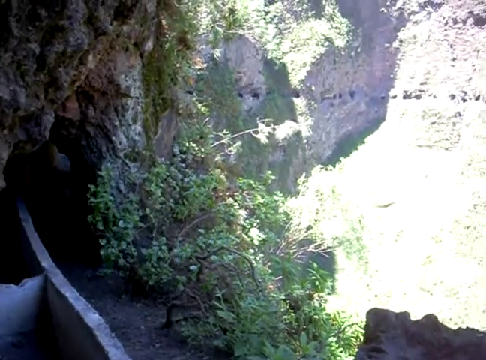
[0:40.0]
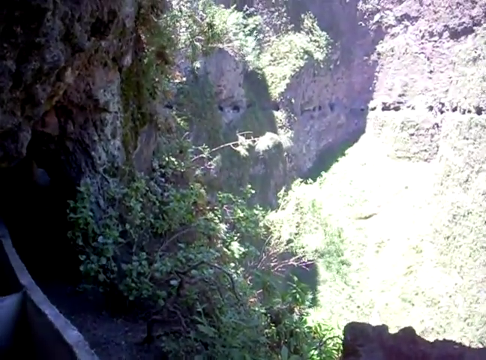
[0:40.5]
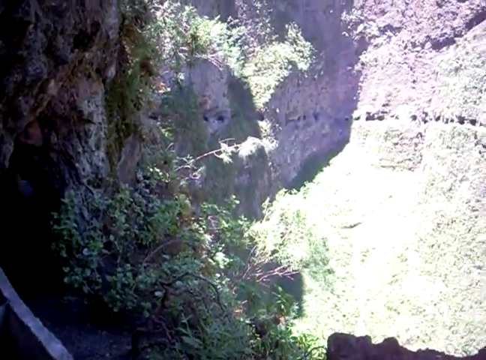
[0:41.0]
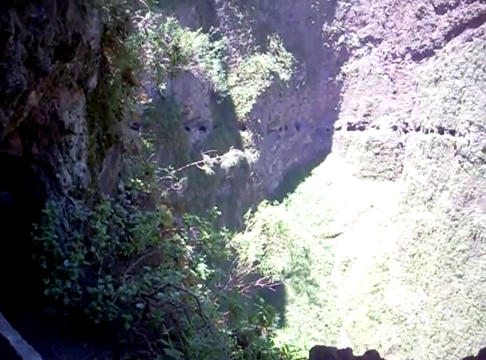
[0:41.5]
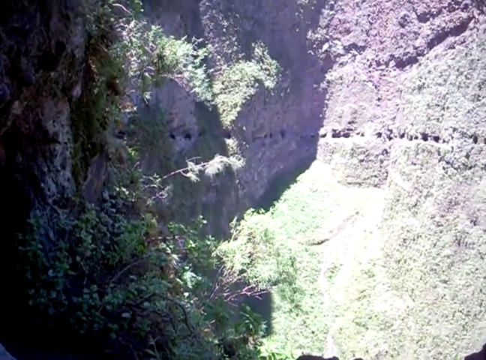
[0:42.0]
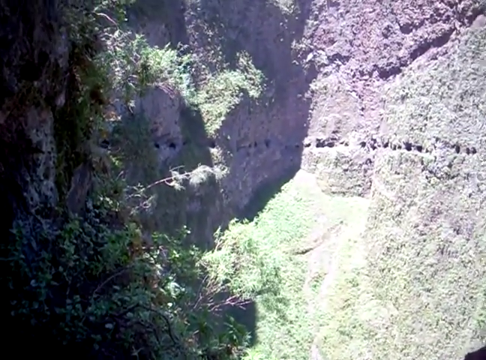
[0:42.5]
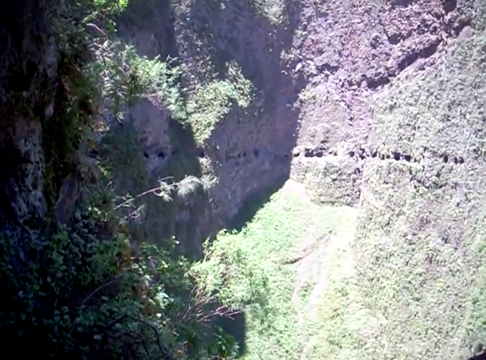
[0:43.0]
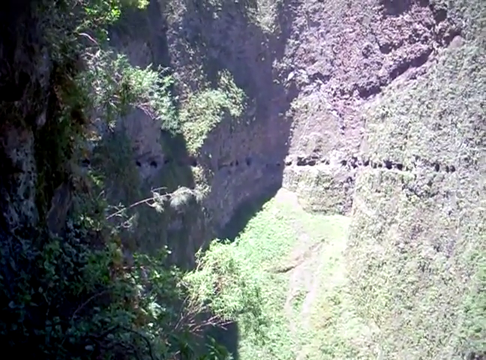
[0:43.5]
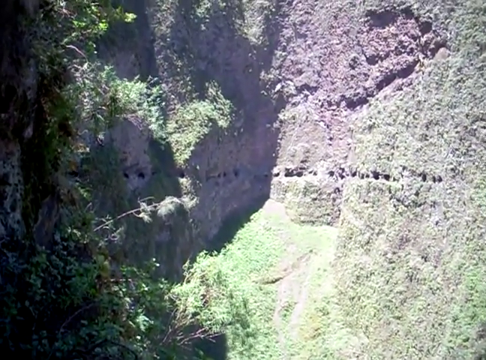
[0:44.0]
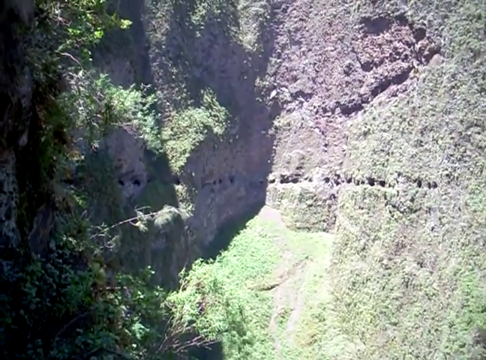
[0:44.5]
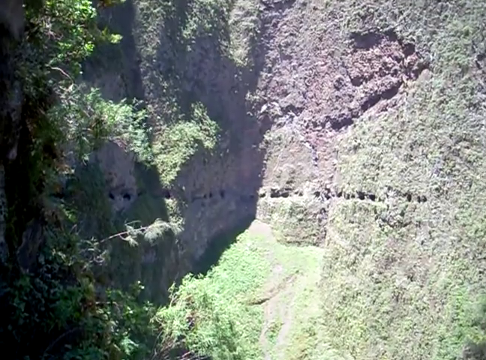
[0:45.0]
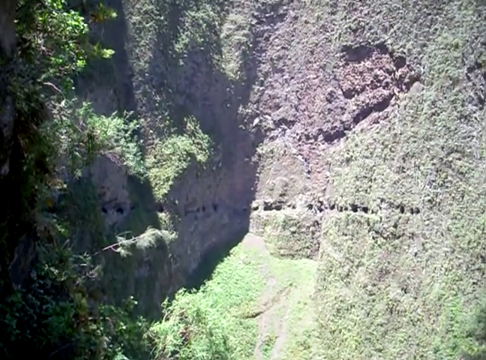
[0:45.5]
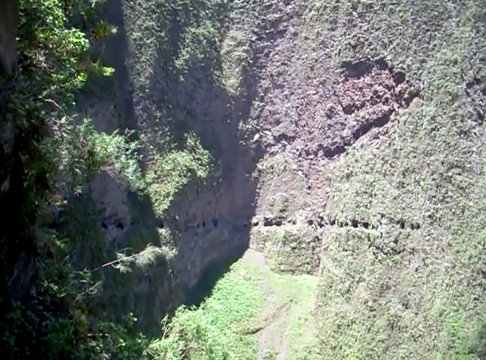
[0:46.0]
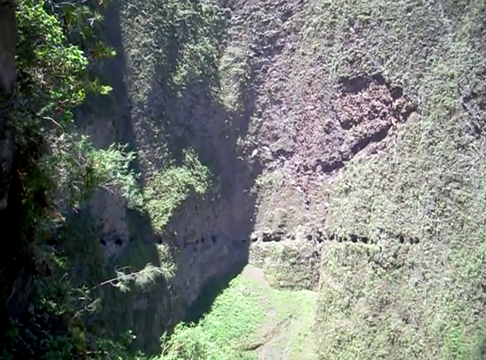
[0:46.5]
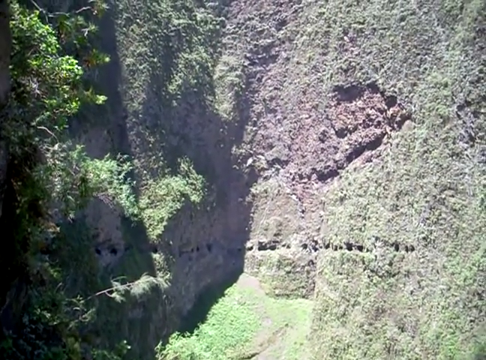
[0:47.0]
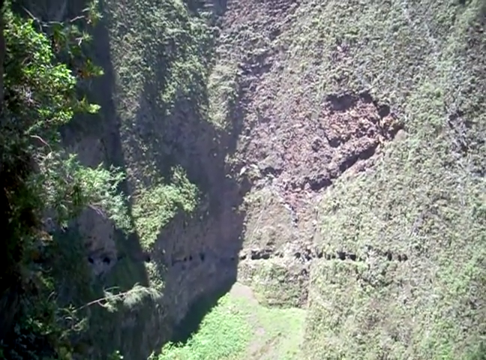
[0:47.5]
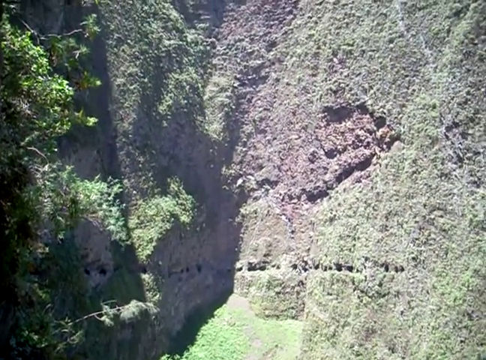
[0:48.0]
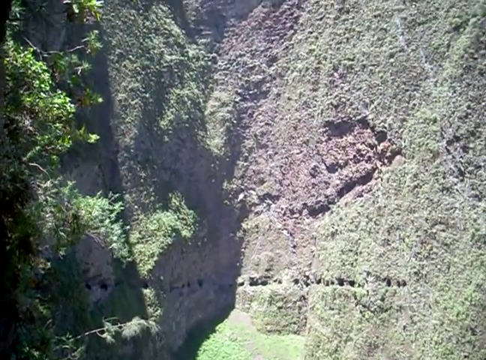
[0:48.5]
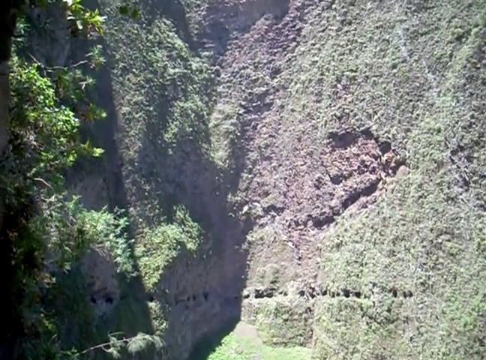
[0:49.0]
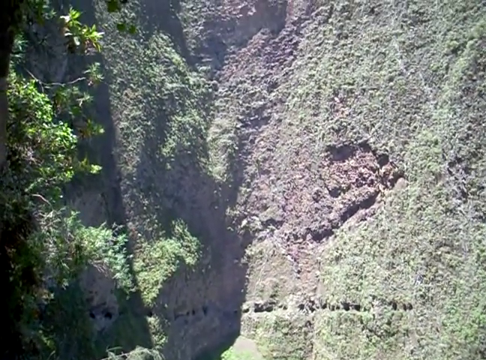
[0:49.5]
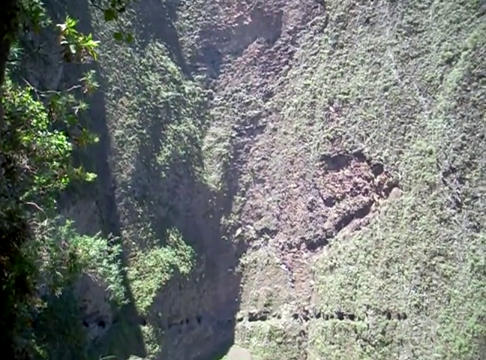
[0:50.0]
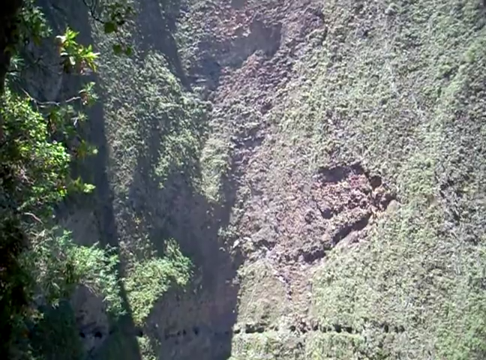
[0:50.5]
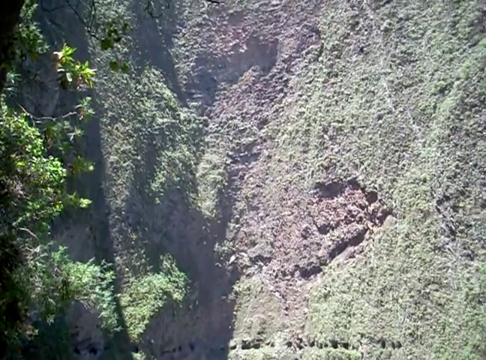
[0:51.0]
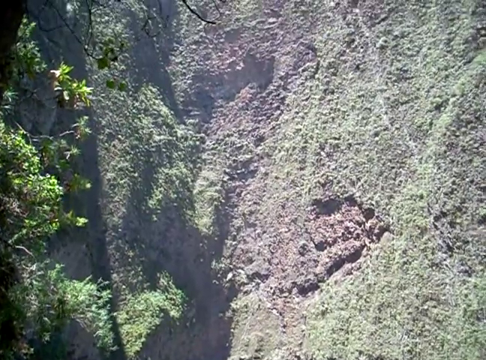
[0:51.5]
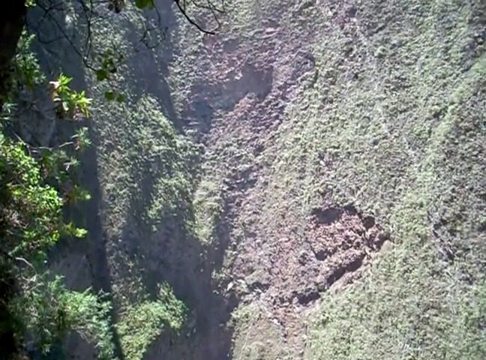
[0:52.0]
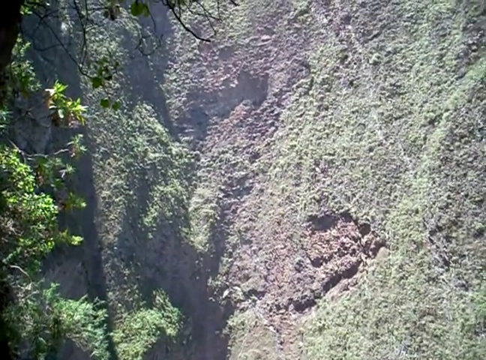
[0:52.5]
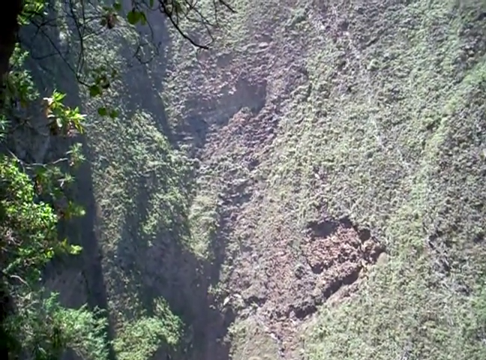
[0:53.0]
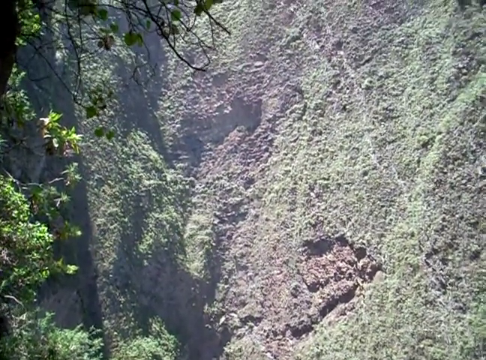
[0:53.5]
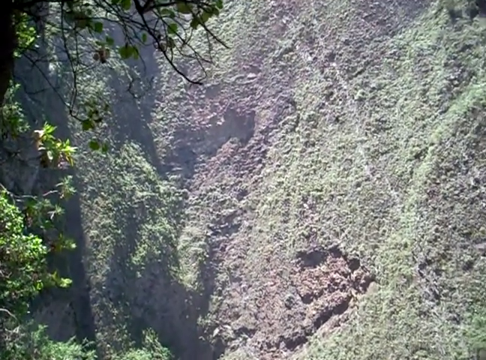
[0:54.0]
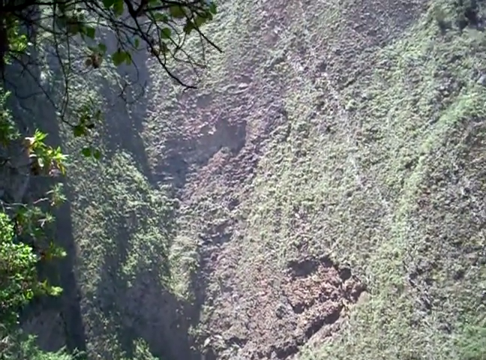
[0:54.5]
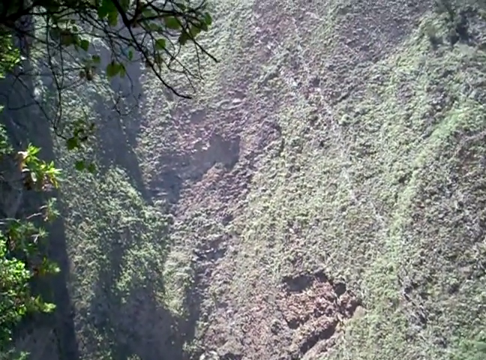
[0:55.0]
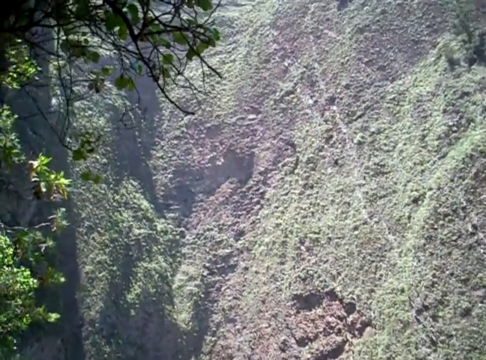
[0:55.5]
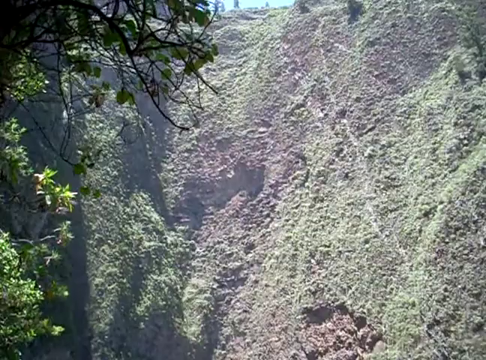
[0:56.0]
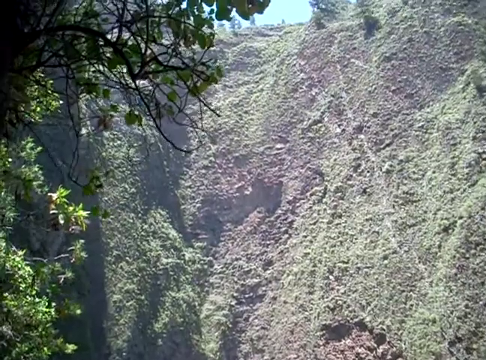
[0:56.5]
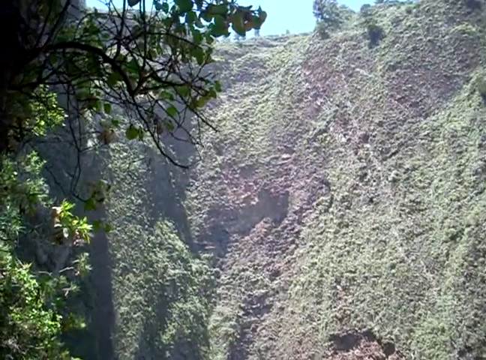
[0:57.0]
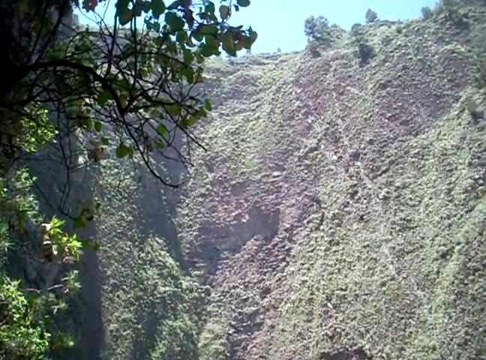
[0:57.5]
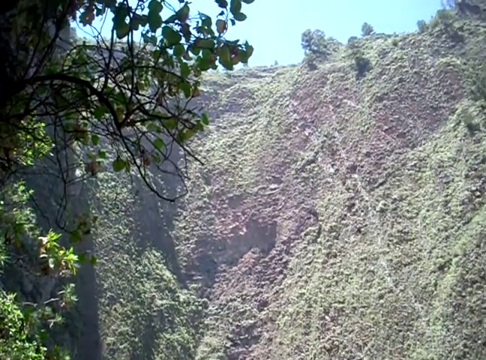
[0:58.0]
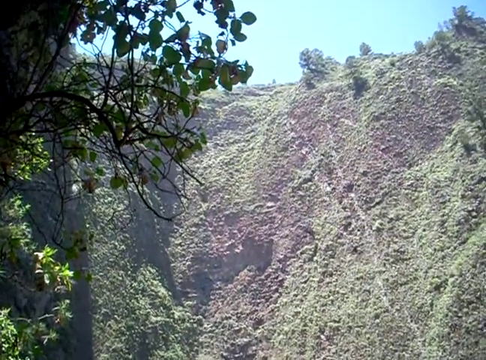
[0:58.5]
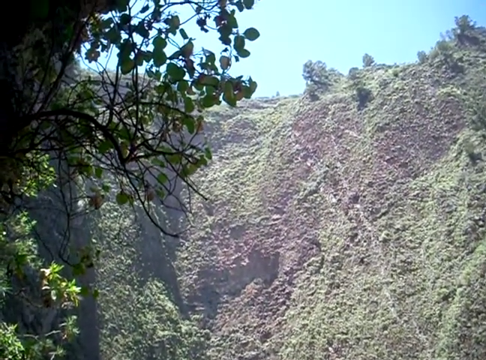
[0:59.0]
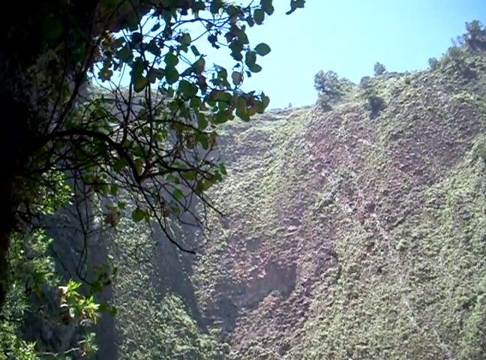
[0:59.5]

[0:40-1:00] The view looks down to show how far the area goes, then takes in the area from top to bottom. Looking upward, it goes very high, and at the top there are trees on the right-hand side that go up higher, with a few trees on the very top of the mountainside. The sky is not visible until the view pans up the side of the mountain, so the viewpoint is very low and deep in the mountain. Holes appear all around the area toward the bottom, apparently at least 10 feet high or higher from the ground. The ground does not appear level at all; there is green moss on it and there appear to be stone structures from natural decay of the area. It looks like this might be a tourist attraction.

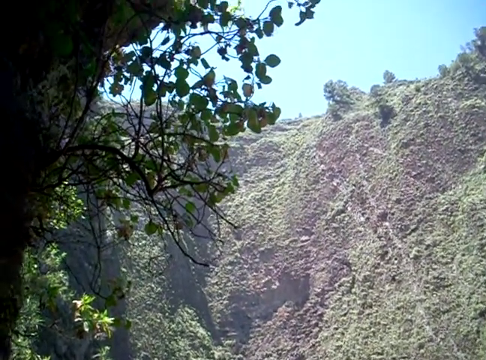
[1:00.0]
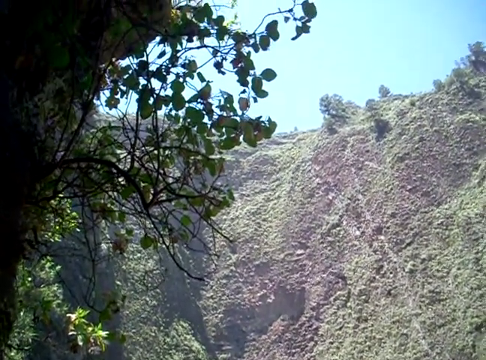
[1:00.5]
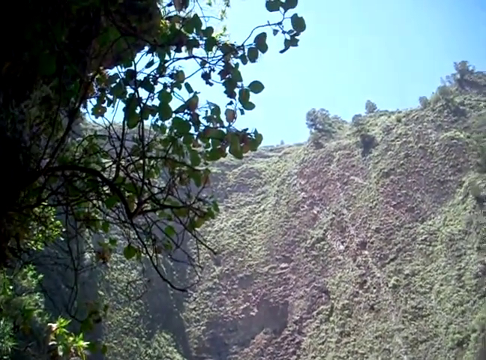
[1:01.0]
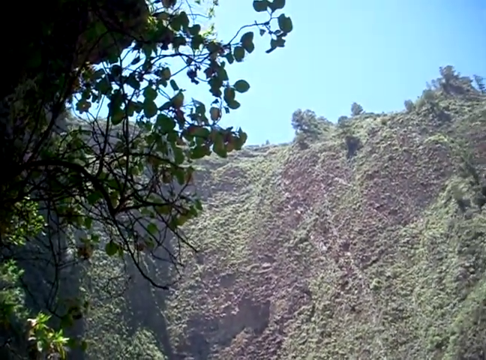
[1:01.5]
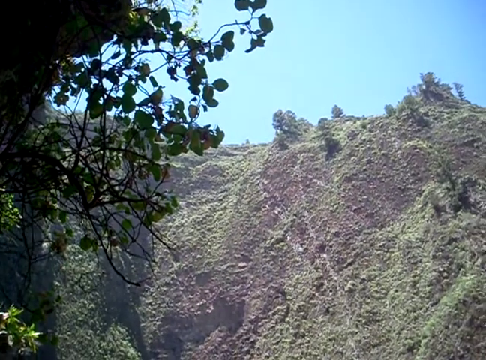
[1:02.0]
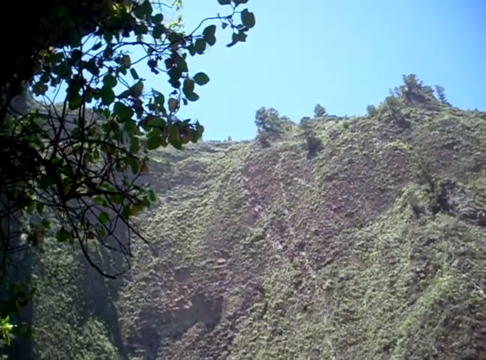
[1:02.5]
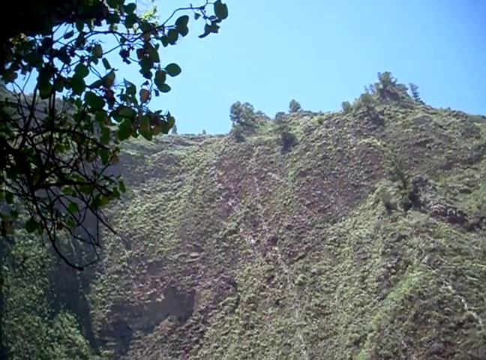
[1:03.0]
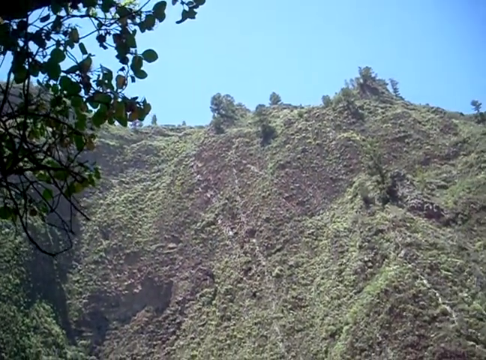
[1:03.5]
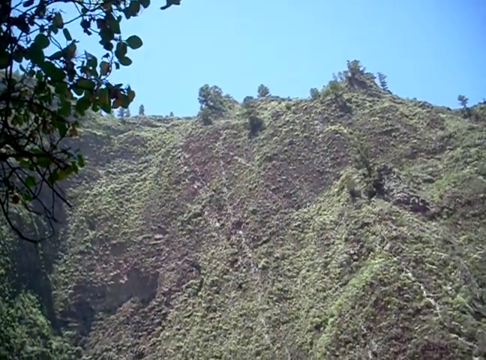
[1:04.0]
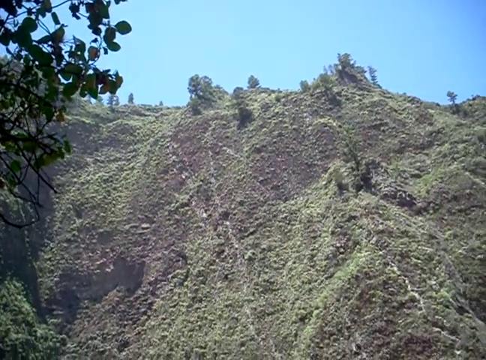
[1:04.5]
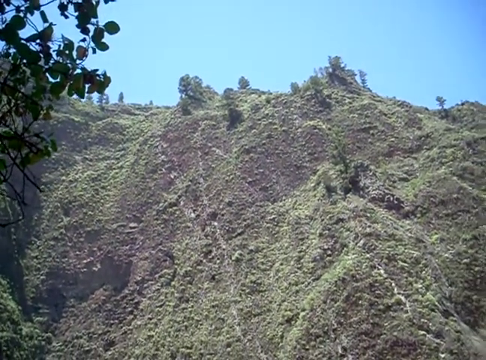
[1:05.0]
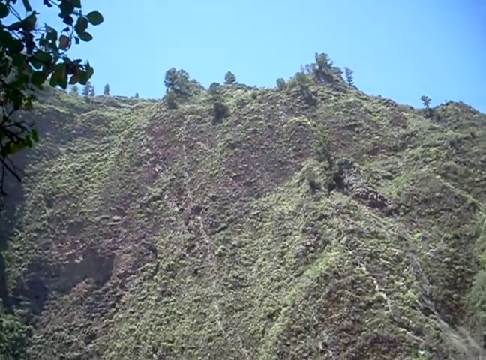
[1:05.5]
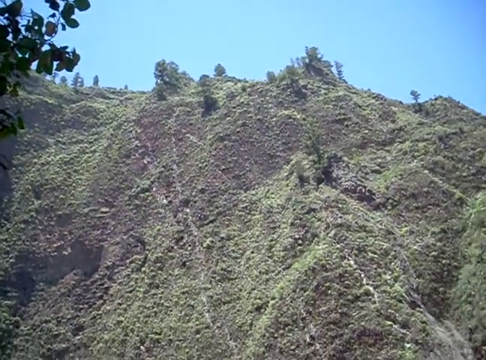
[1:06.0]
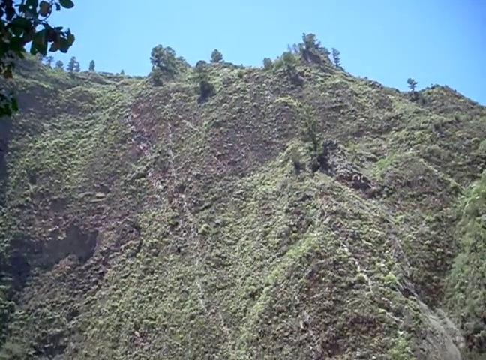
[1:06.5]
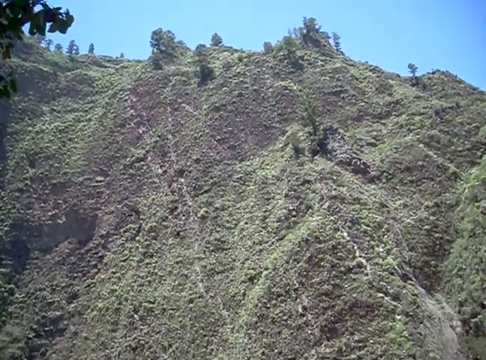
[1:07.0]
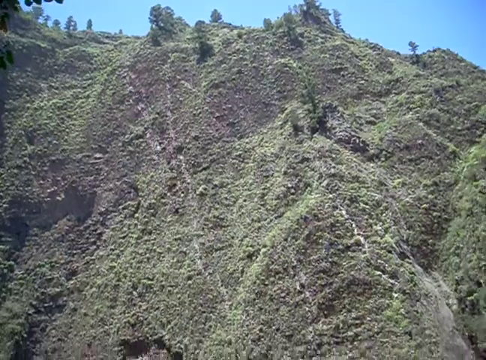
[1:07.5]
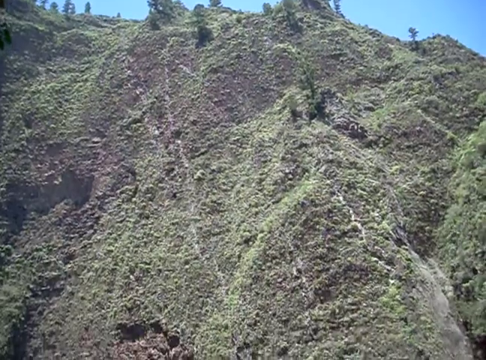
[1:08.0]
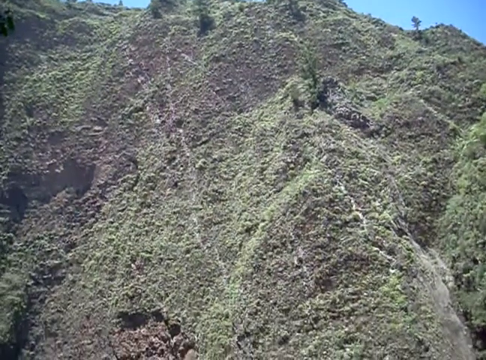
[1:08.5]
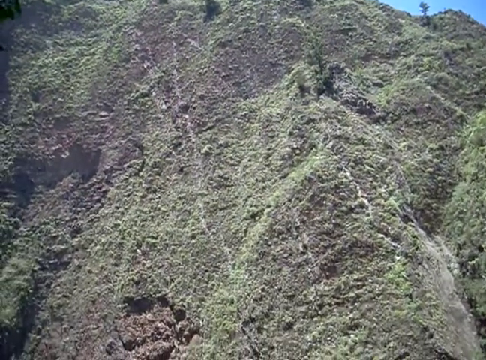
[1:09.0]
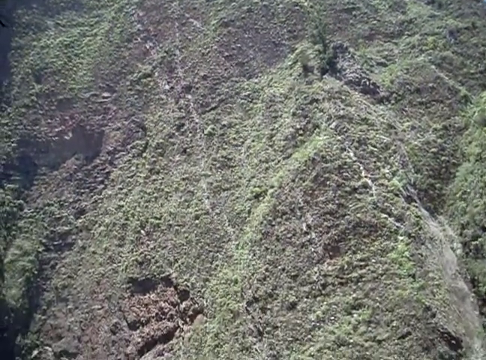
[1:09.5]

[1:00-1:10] The view looks at the outside, at the side of the mountain, showing white markings on the stone and green moss on the outside of the mountain edge. There is not too much moss, but enough to be noticeable, and there are a lot of white markings, apparently from stones or gravel falling down. Trees are up on top of the hillside or mountain, and it looks like a steep incline downwards rather than straight up. The viewpoint appears to be close to the very bottom of the area looking upwards. The view moves from right to left and left to right taking in the scenery, and a tree on the left-hand side is also in the image.